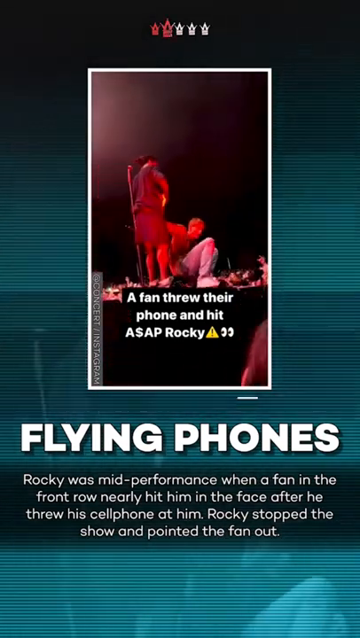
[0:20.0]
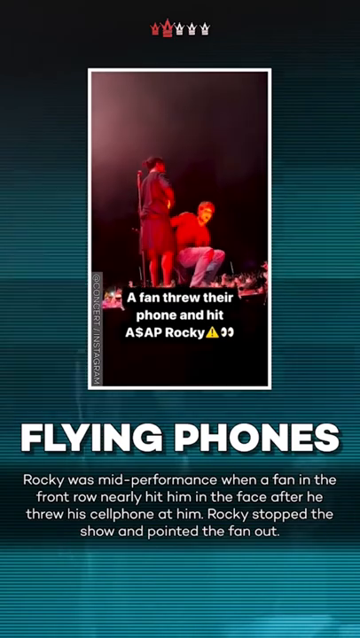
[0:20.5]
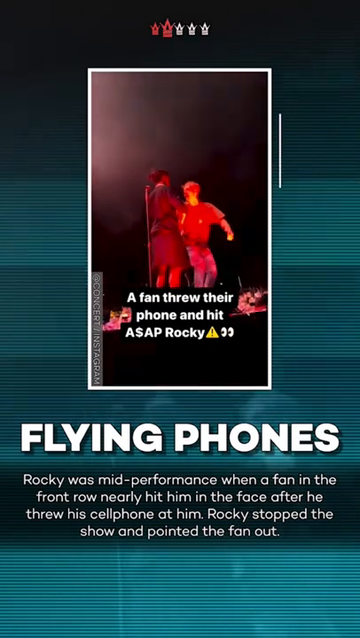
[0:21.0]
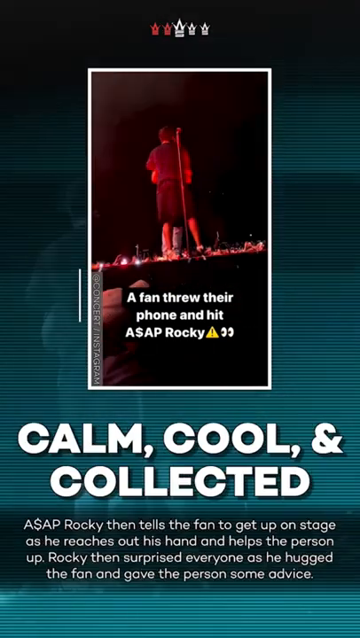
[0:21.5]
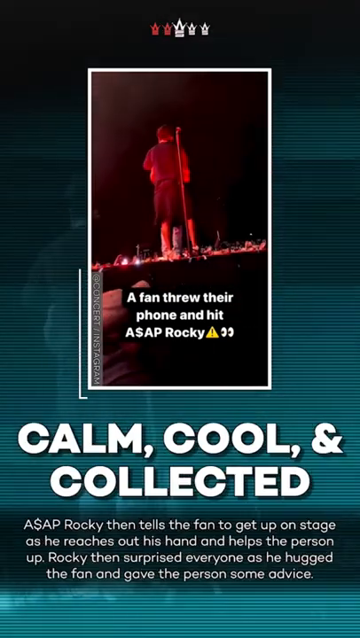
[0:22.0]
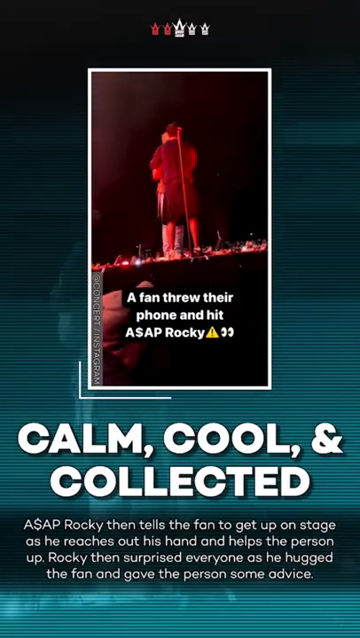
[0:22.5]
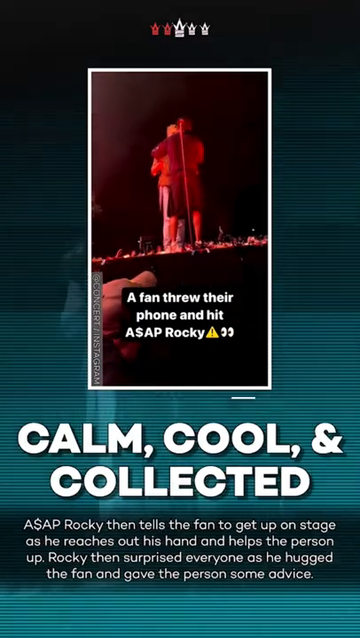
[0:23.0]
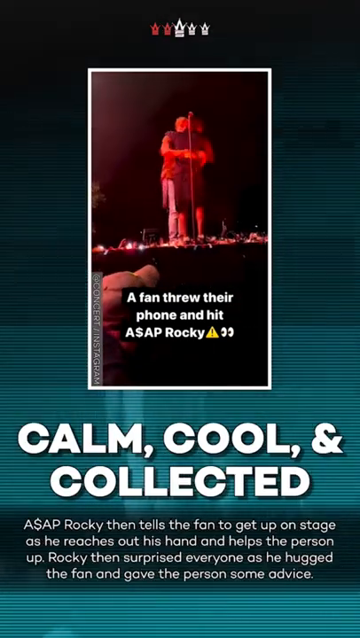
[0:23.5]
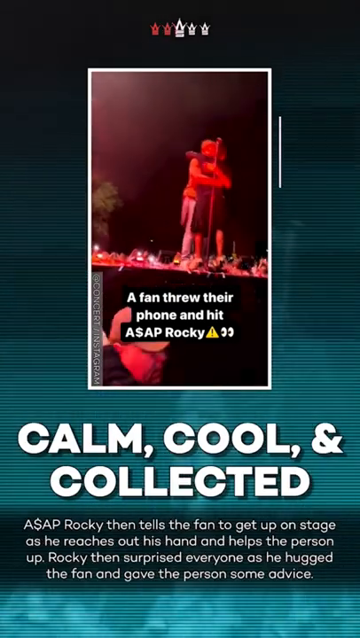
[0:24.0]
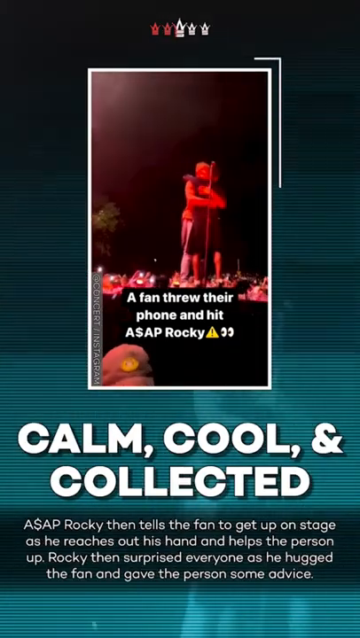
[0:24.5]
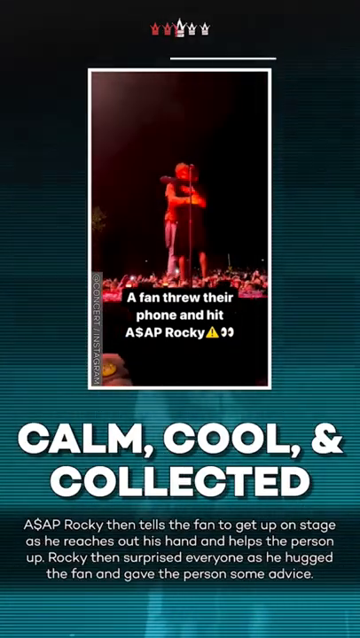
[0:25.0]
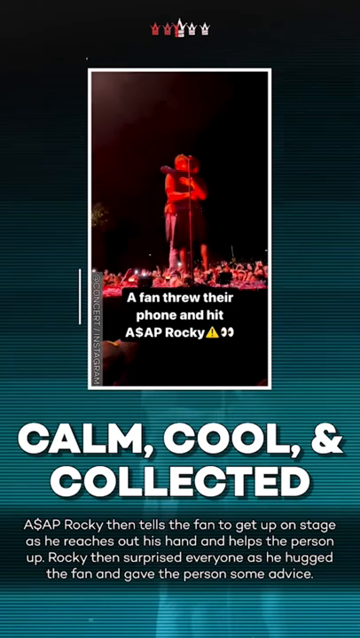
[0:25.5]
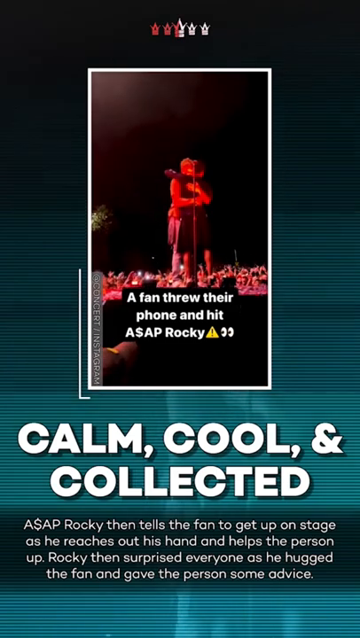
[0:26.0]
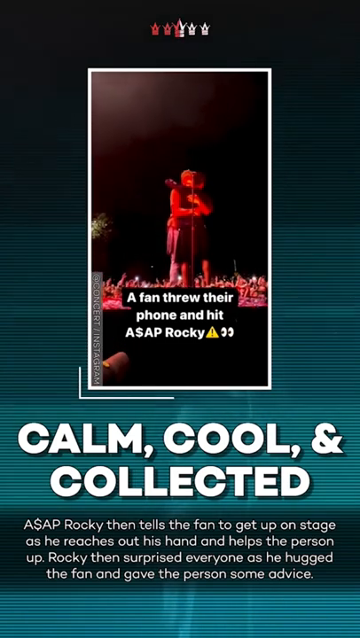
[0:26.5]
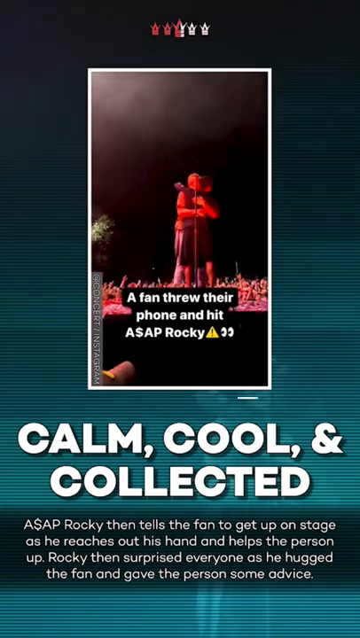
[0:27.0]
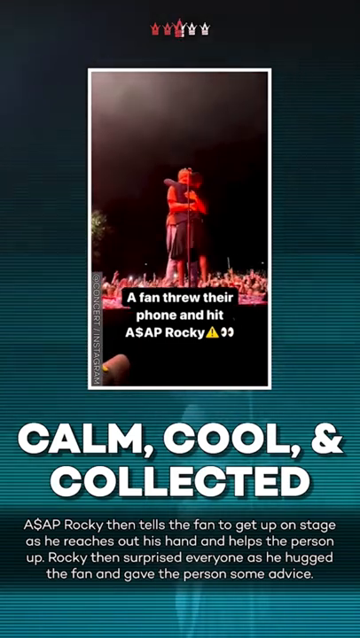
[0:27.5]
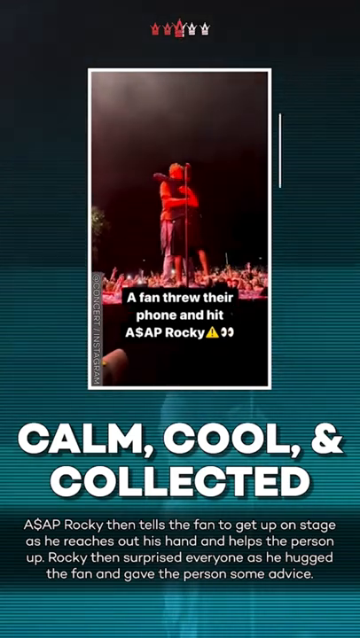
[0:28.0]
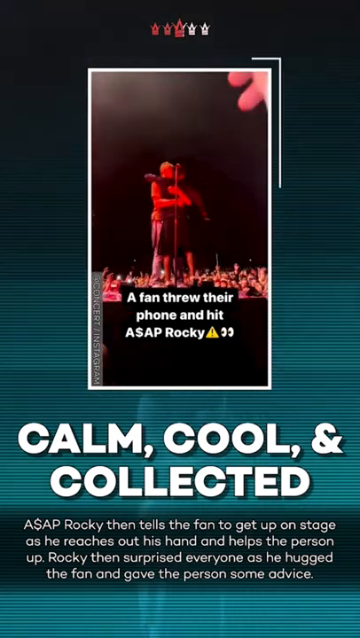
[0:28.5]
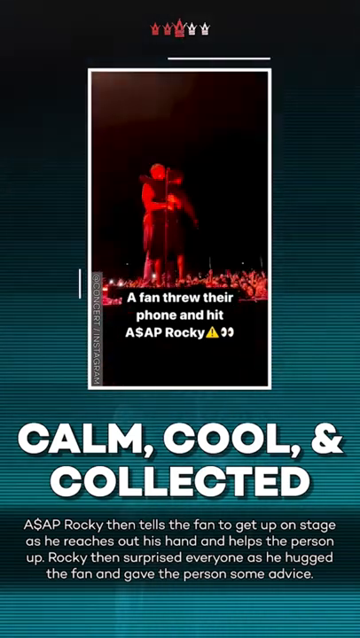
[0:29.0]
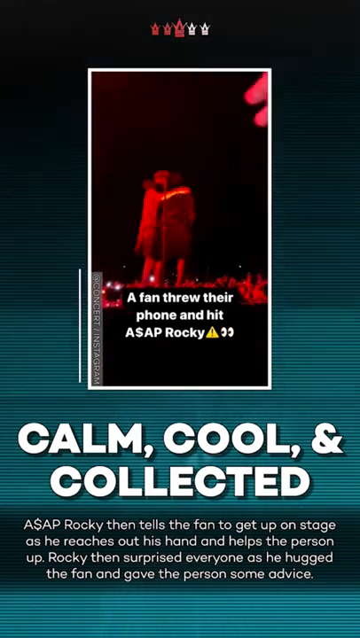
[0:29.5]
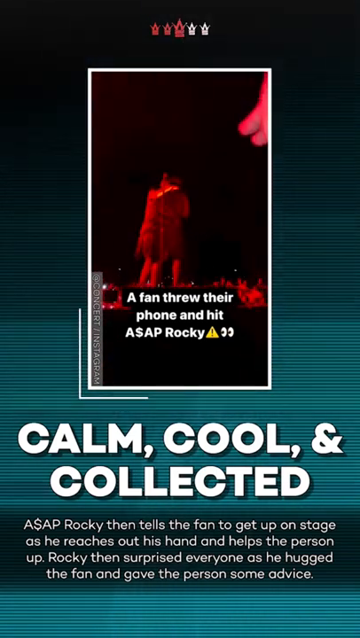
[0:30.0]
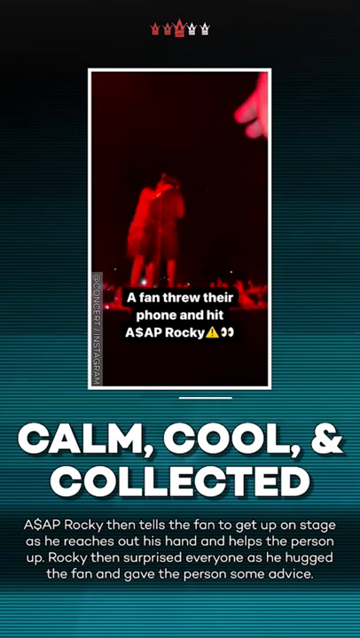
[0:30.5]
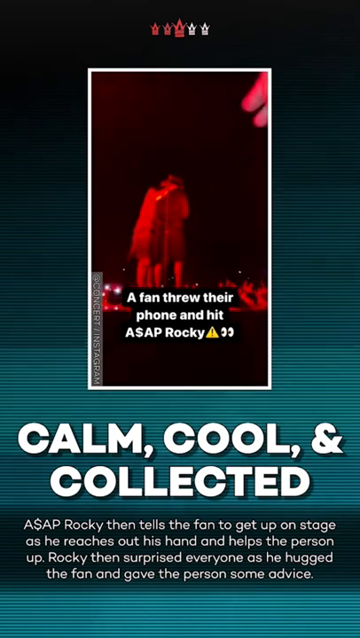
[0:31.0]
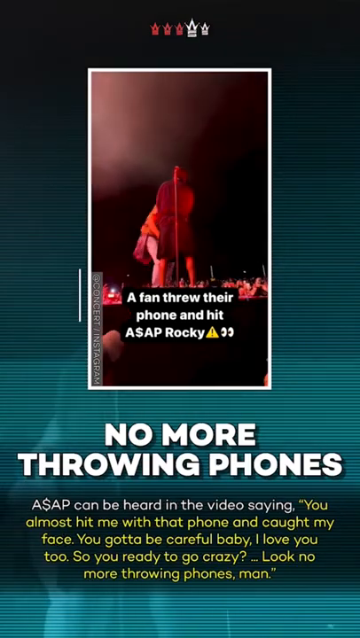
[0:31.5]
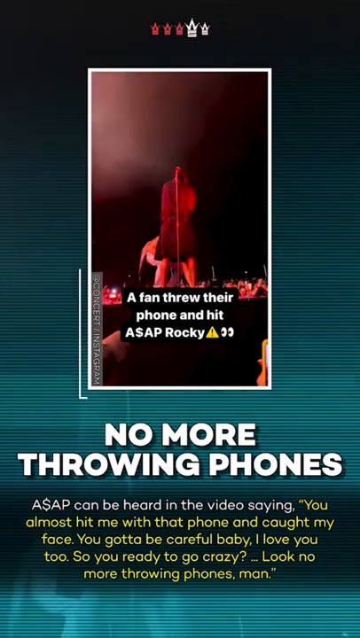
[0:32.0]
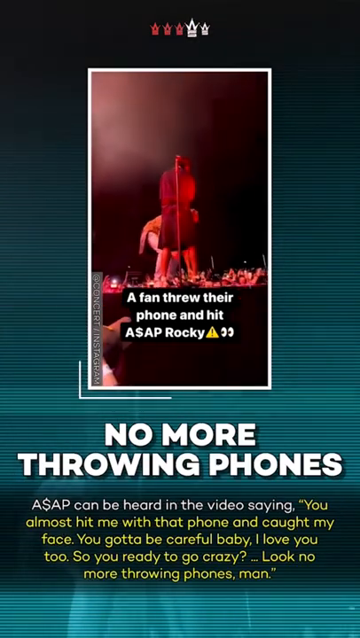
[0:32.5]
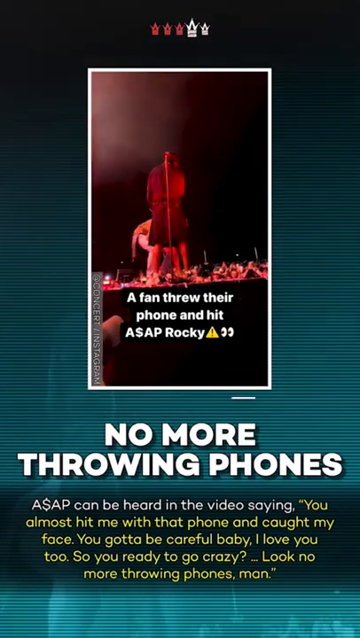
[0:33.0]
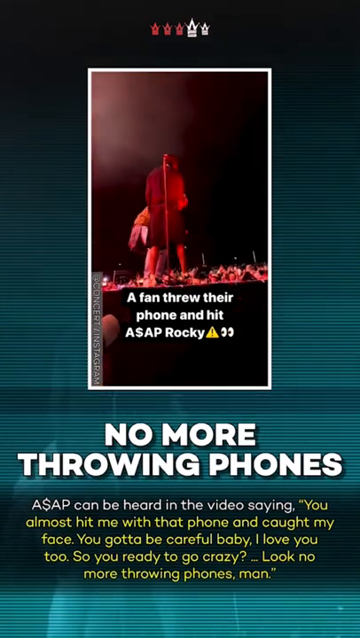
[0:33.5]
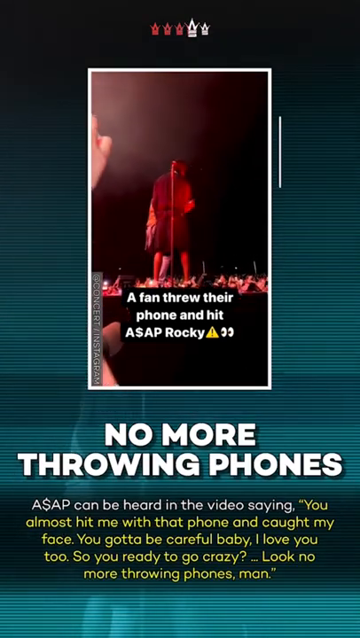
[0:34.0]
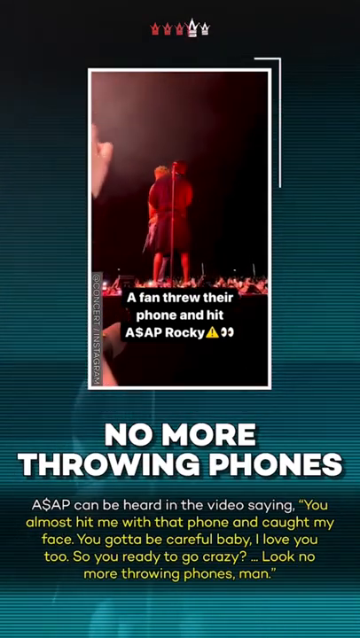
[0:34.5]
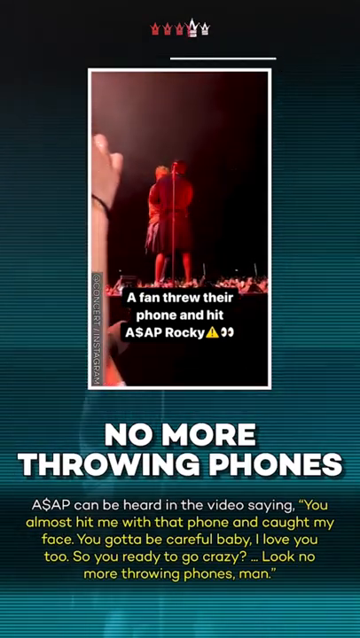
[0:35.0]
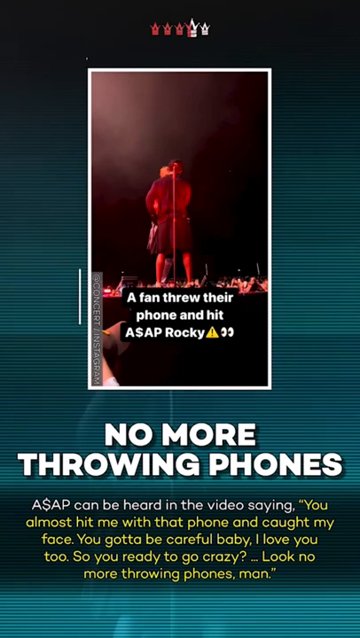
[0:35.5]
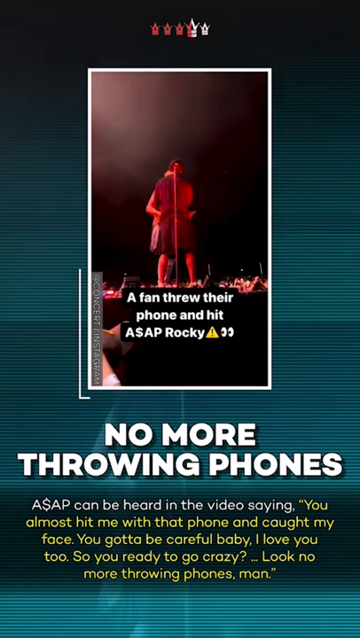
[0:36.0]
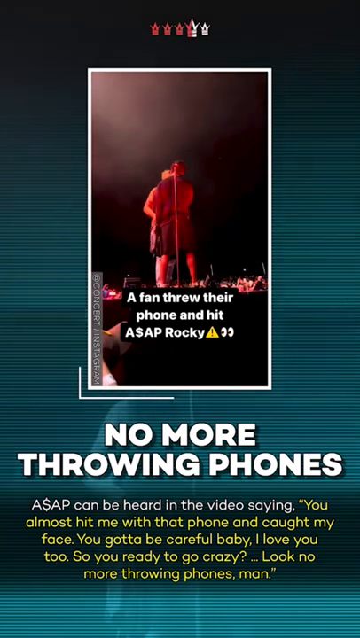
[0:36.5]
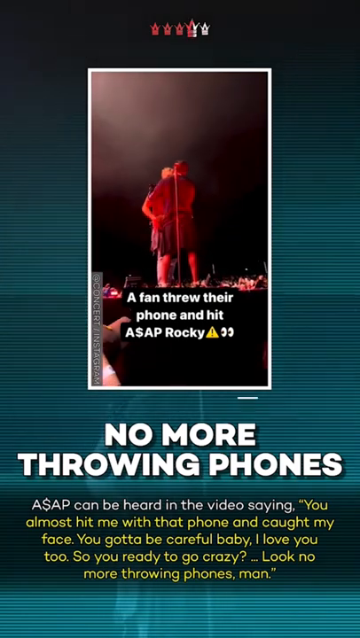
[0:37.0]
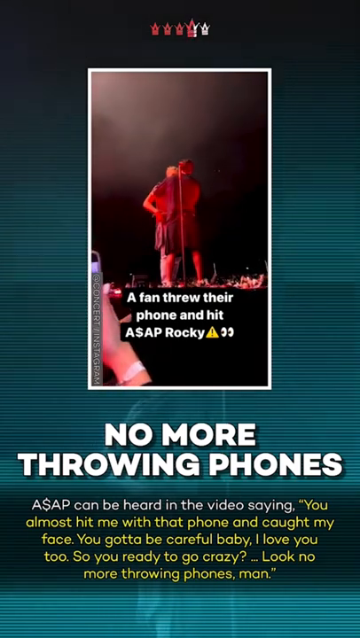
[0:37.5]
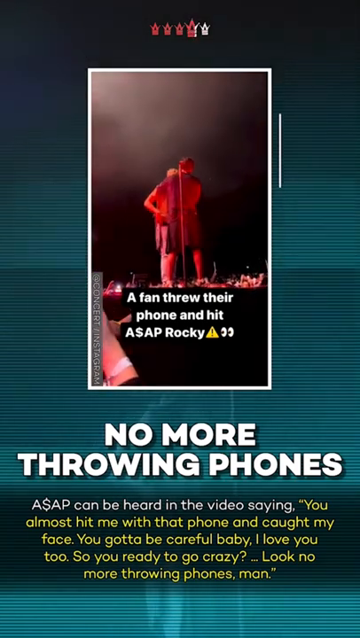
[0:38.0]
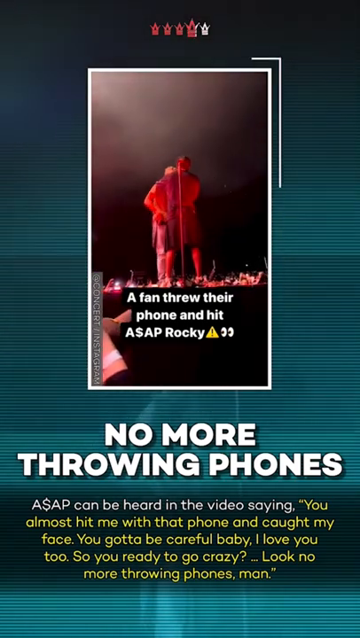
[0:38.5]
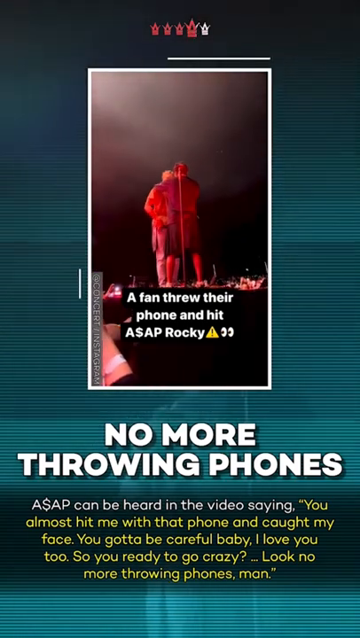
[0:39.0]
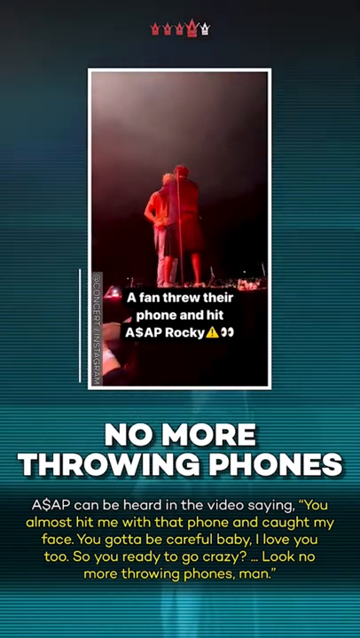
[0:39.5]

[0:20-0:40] The article continues about the flying phone thrown at A$AP Rocky mid-performance. It states that Rocky told the fan to get up on stage and reached out a hand to help the person up, then surprised everyone by hugging the fan and giving the person some advice, taking a calm, cool and collected approach. It reads along the lines of no more throwing phones, apparently the advice he gave: he warned the fan that the phone almost hit his face, asked him to stop throwing phones because there is no reason for it, said he loves his fans, and told them to stay safe and not try to hurt him.